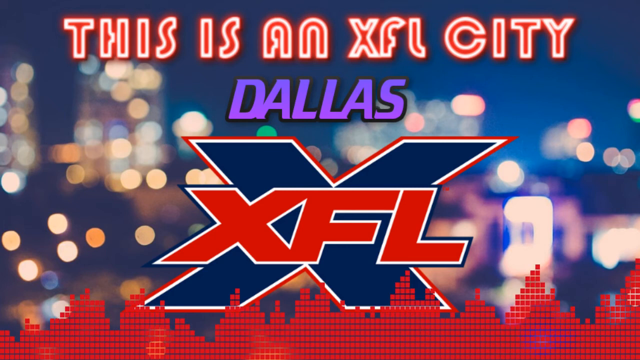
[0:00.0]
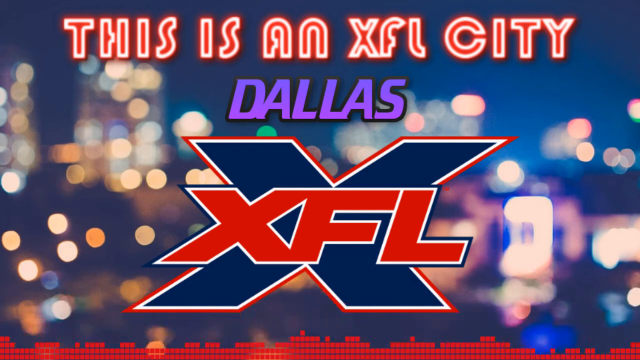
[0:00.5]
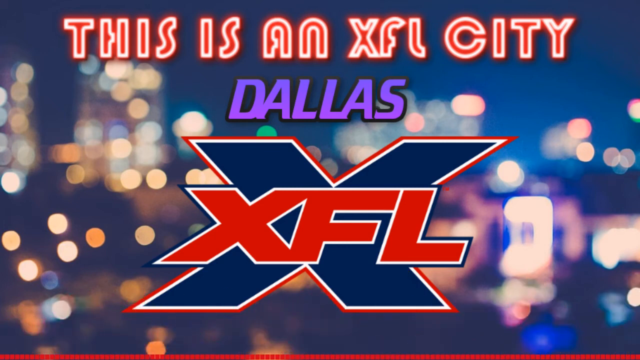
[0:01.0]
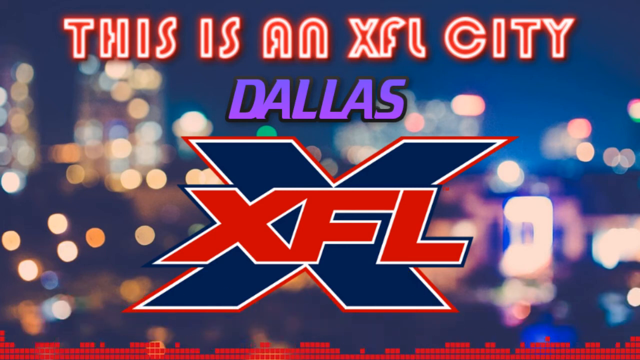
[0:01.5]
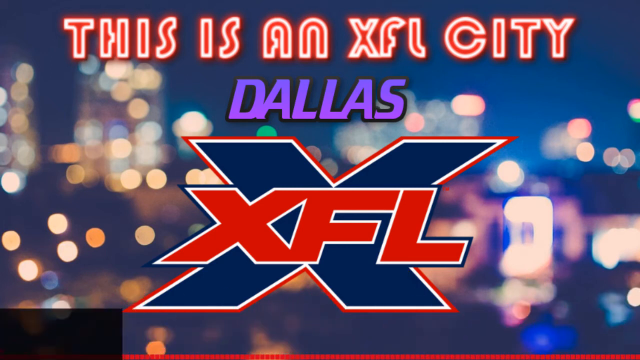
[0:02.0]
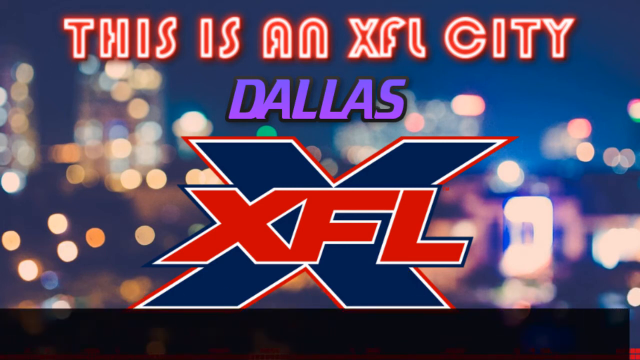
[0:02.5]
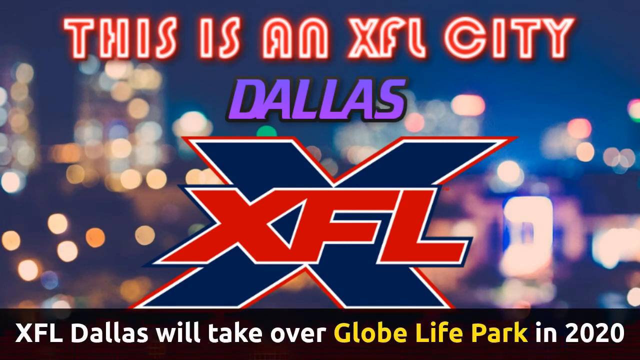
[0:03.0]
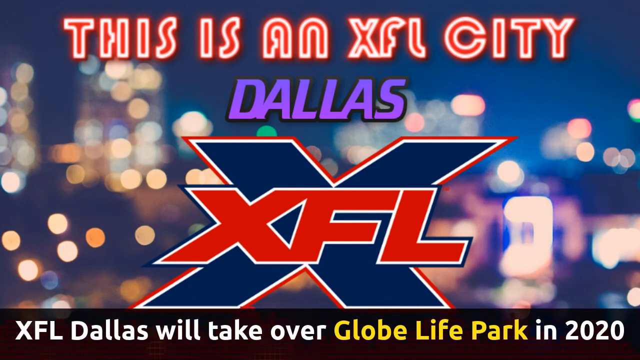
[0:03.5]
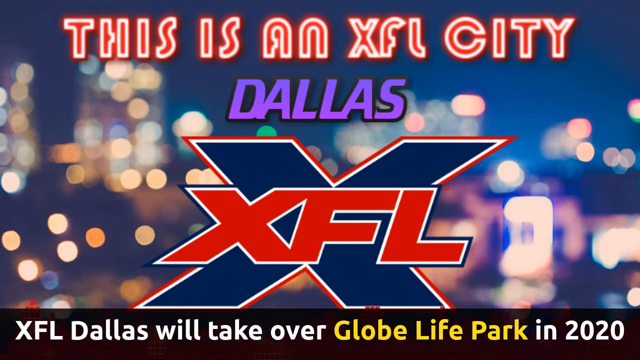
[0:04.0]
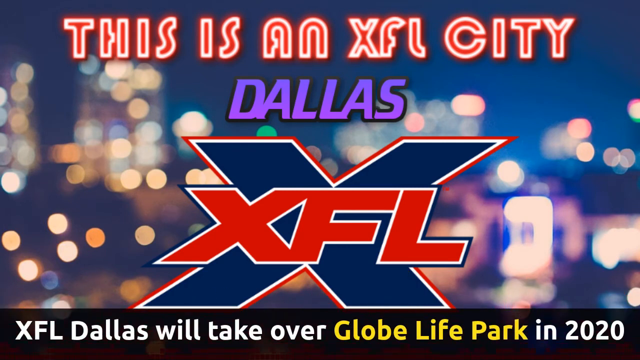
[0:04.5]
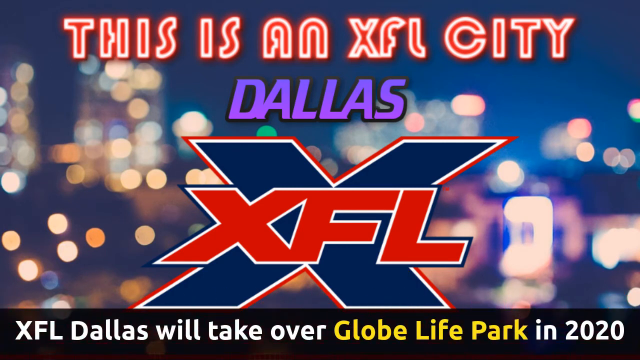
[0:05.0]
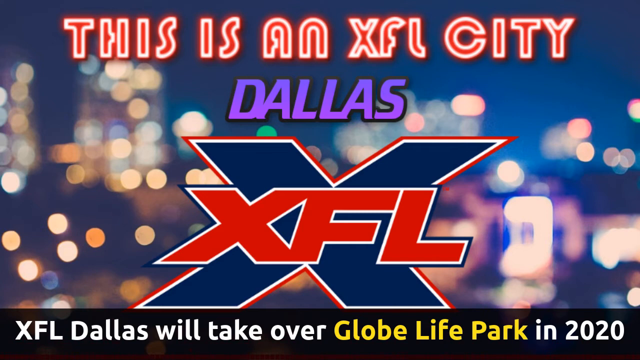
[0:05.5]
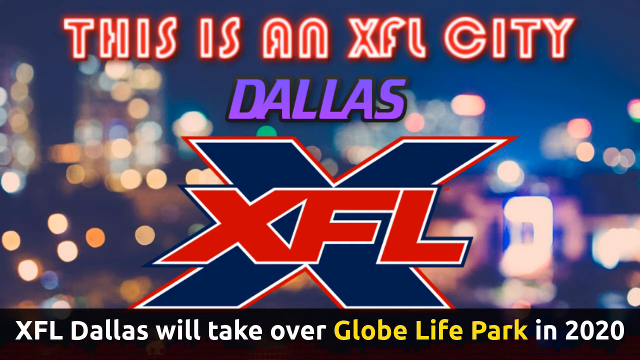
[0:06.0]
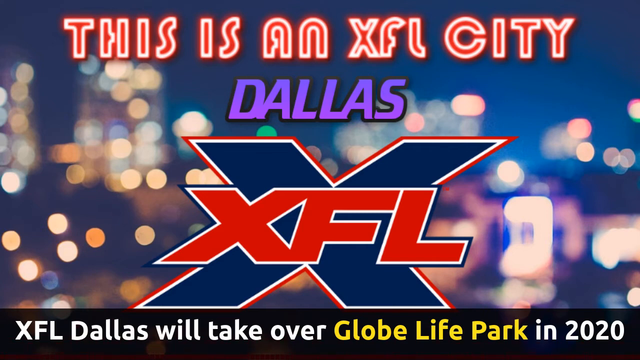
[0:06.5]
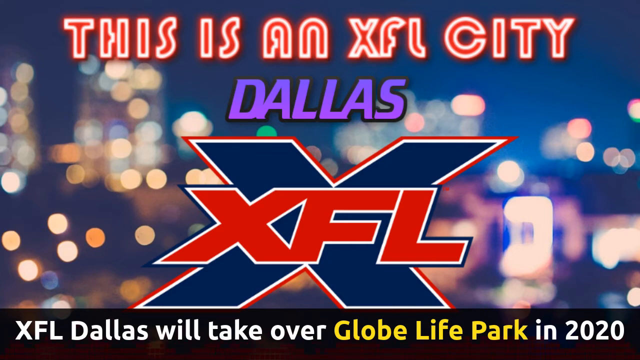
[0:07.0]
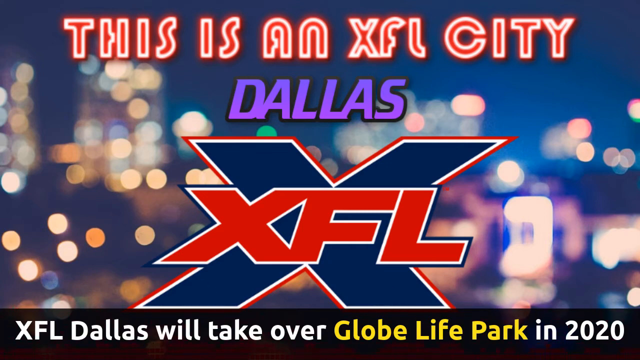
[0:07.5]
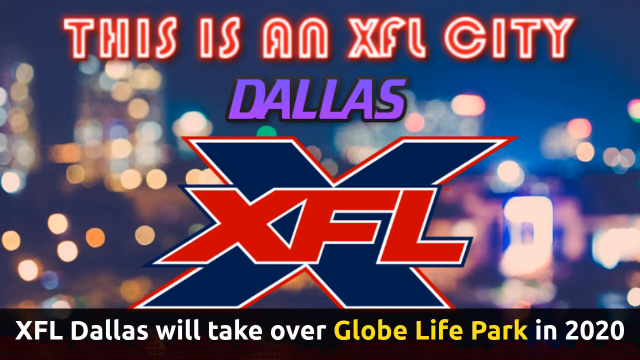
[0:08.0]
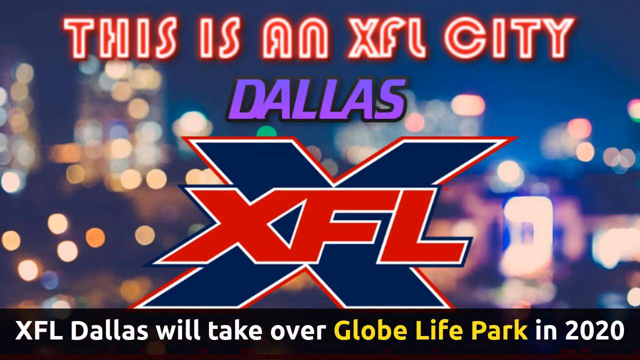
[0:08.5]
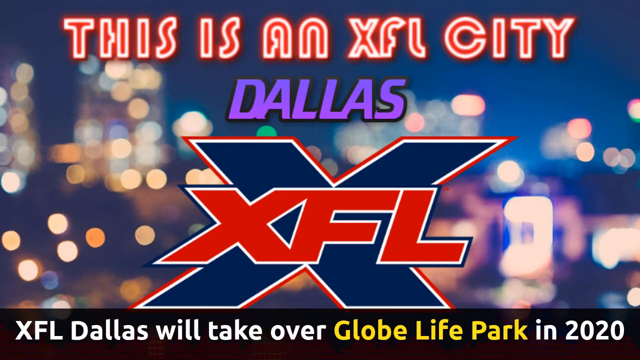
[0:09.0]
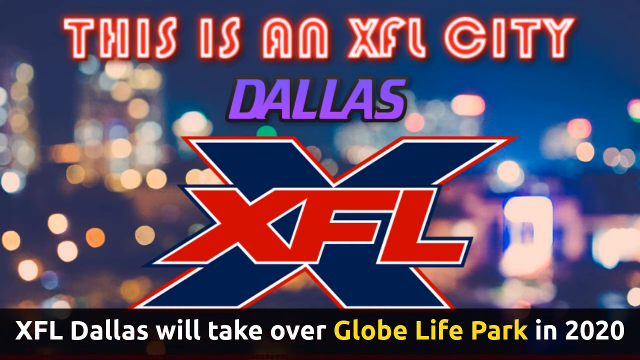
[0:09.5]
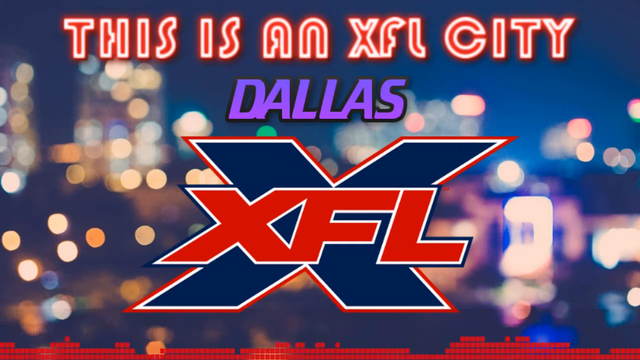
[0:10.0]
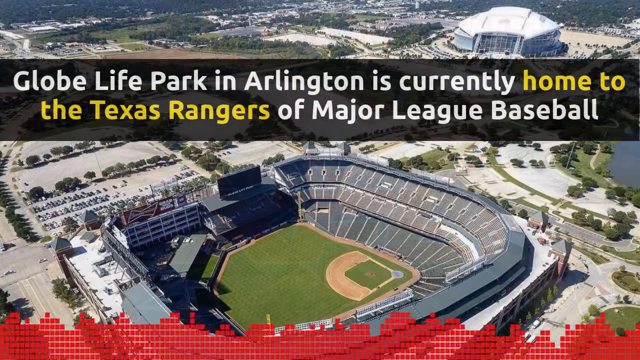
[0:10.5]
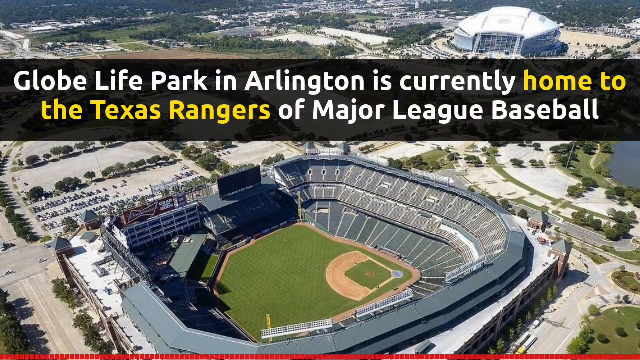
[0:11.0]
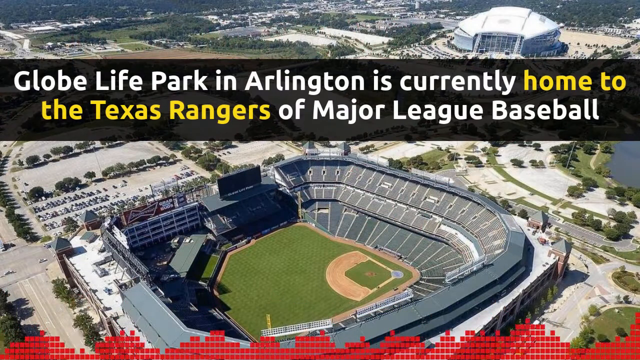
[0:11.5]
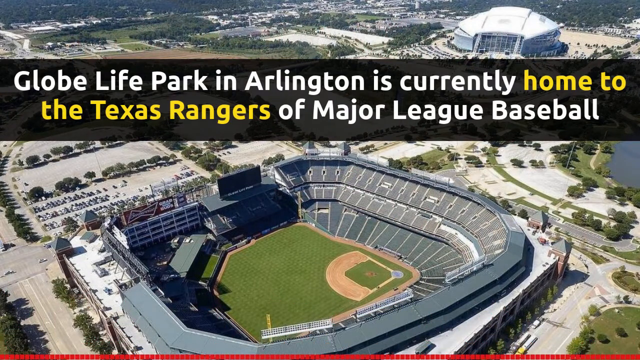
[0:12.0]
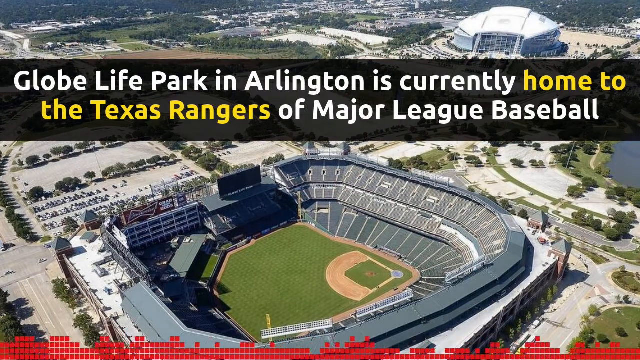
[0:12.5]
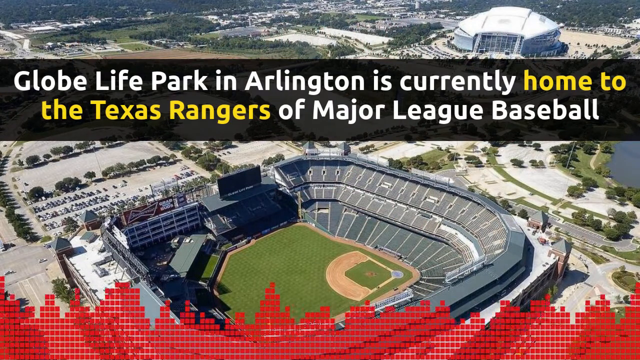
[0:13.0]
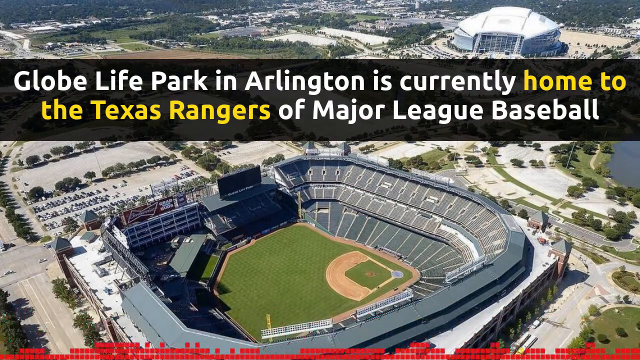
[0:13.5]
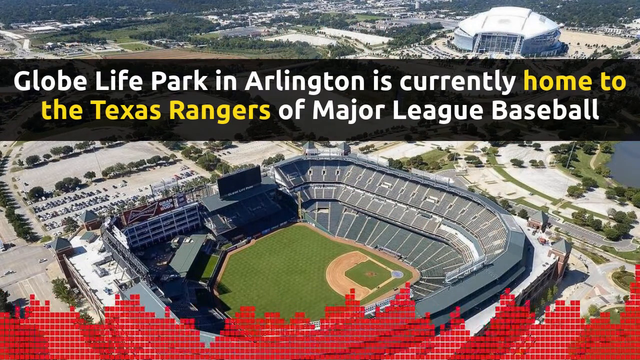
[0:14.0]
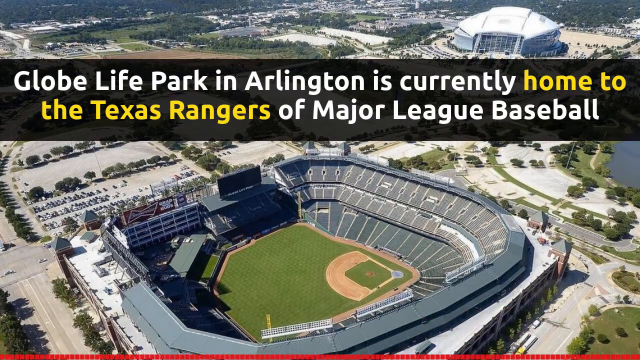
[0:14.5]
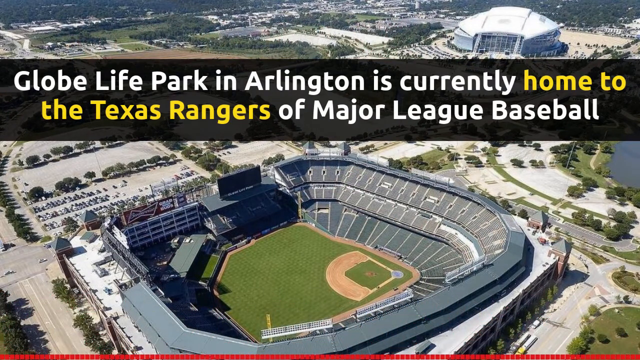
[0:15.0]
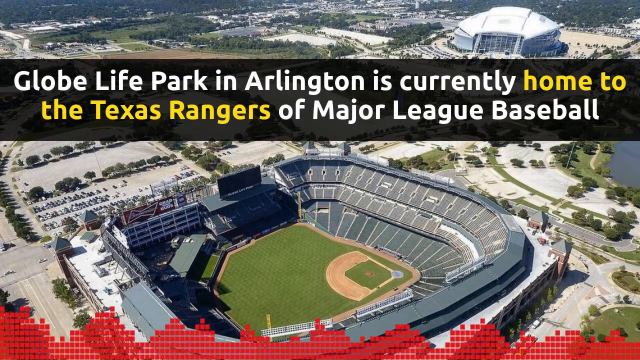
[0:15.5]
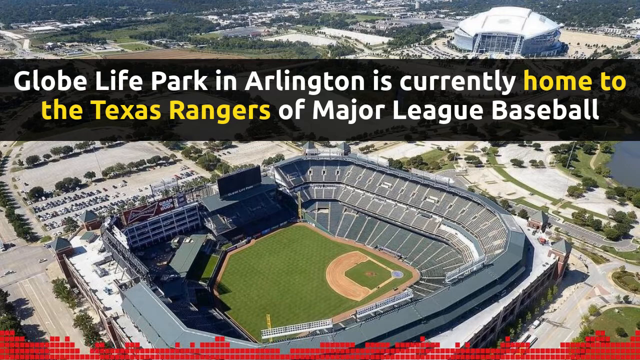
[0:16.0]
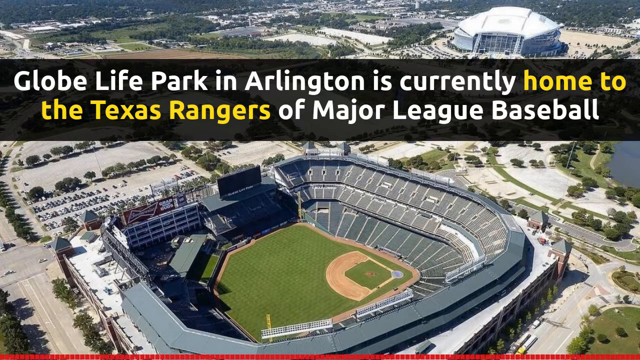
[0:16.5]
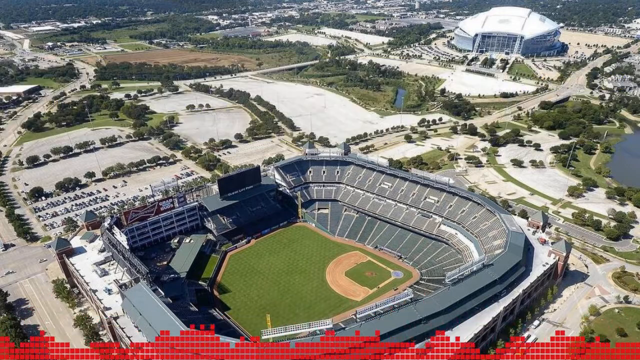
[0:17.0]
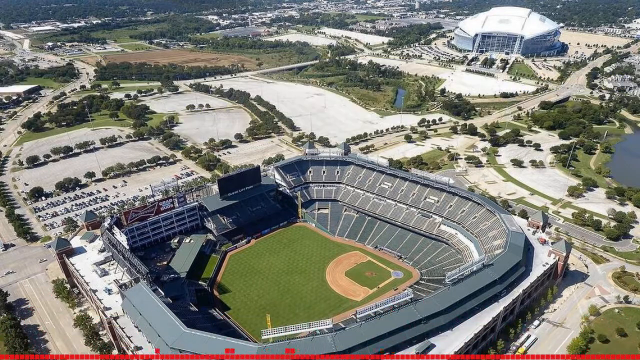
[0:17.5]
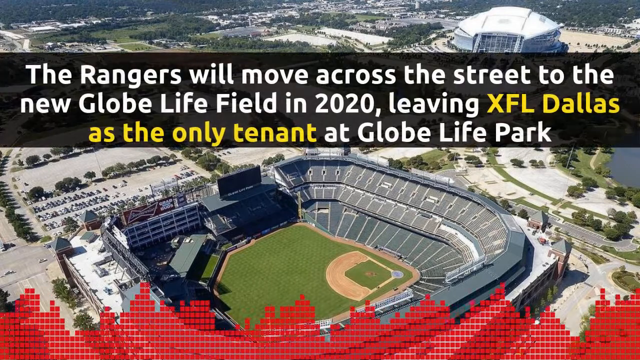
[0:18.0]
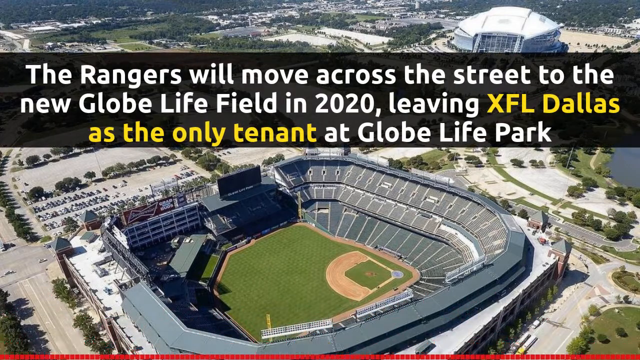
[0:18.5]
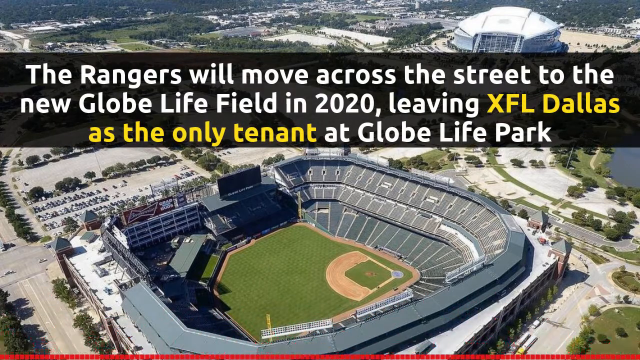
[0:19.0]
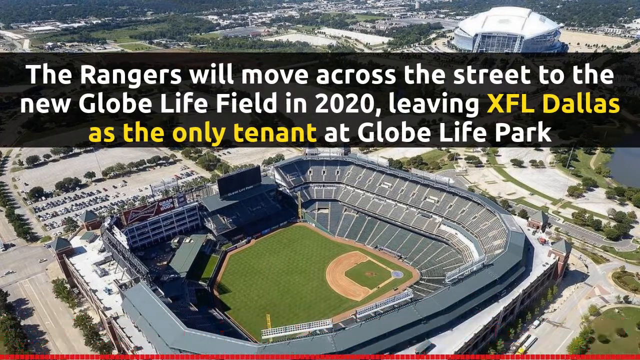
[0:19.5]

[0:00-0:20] An aerial view shows Globe Life Park, a large stadium surrounded by huge car parks, with a convention center or shopping mall about 300 meters away across the other side of the car park. There is also what appears to be a lake or river nearby.